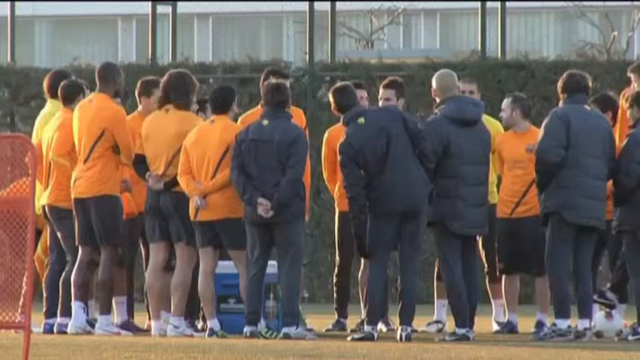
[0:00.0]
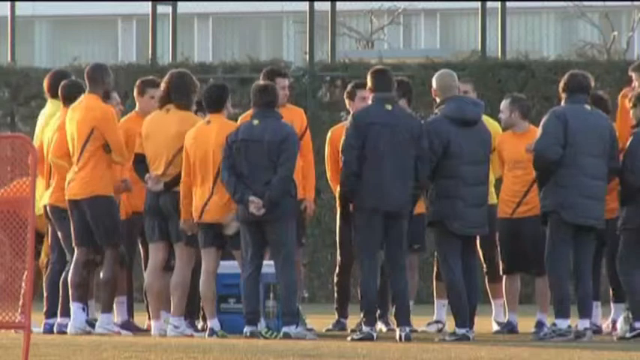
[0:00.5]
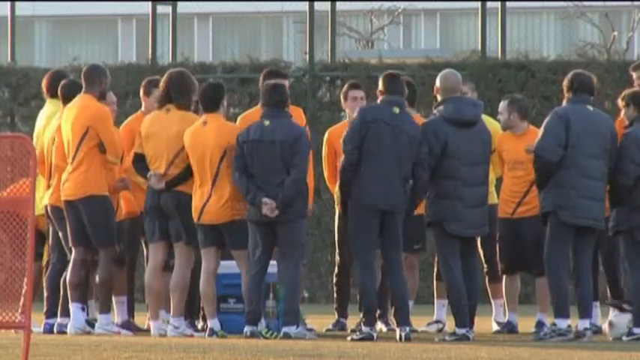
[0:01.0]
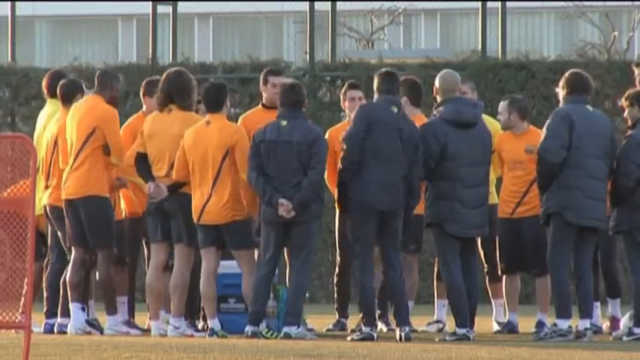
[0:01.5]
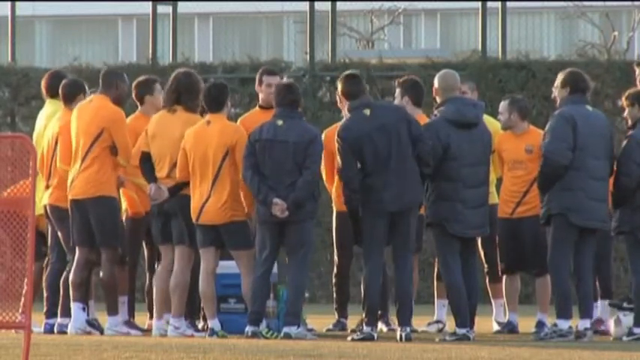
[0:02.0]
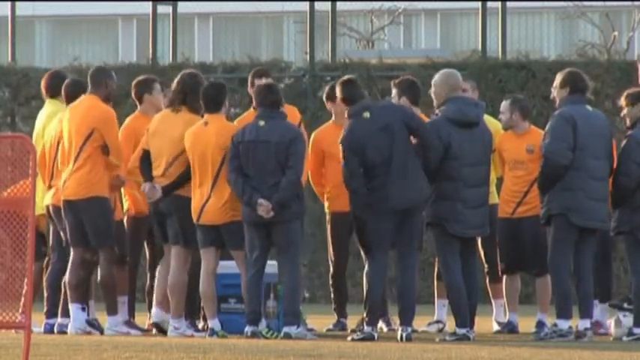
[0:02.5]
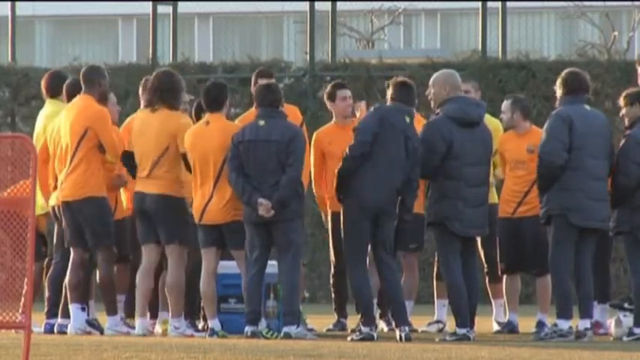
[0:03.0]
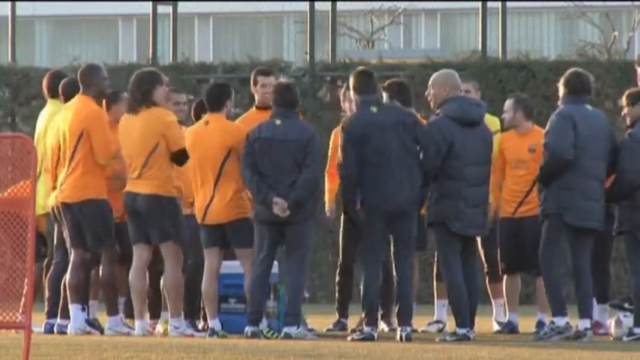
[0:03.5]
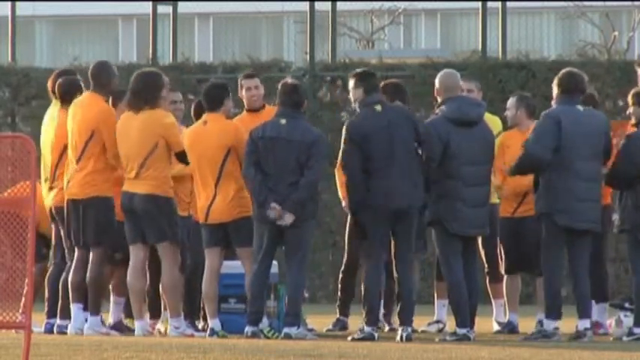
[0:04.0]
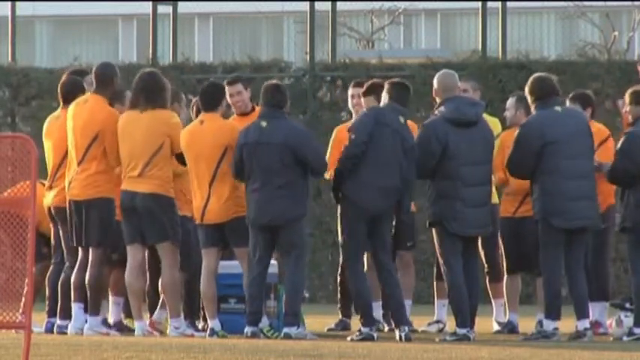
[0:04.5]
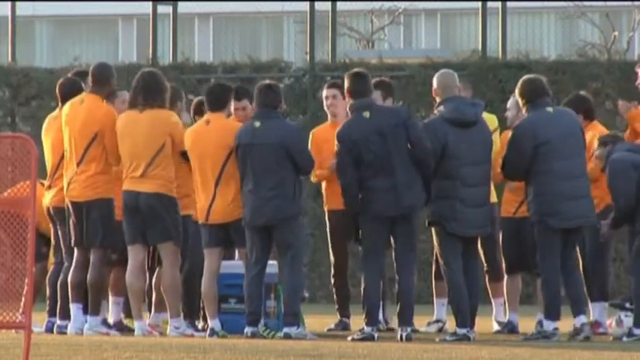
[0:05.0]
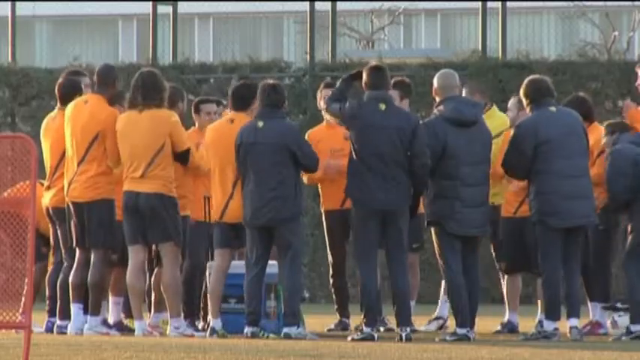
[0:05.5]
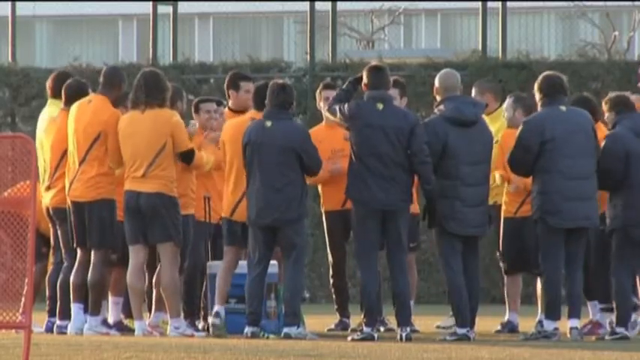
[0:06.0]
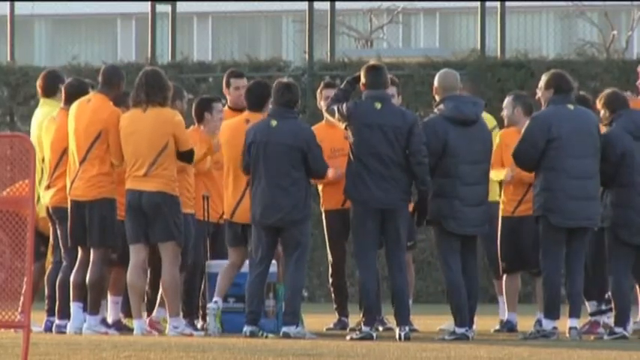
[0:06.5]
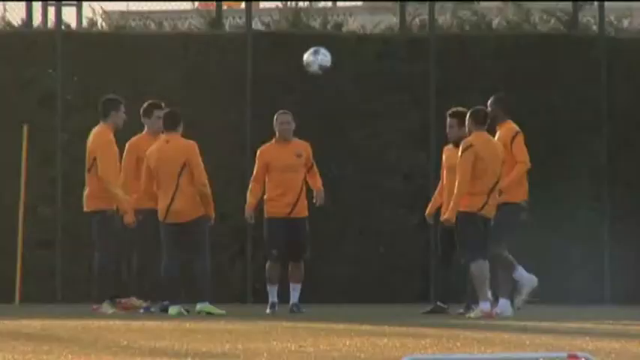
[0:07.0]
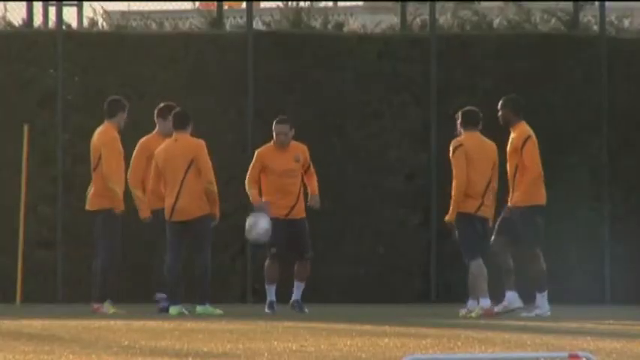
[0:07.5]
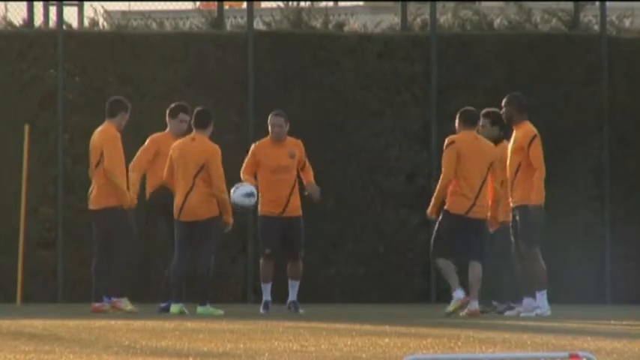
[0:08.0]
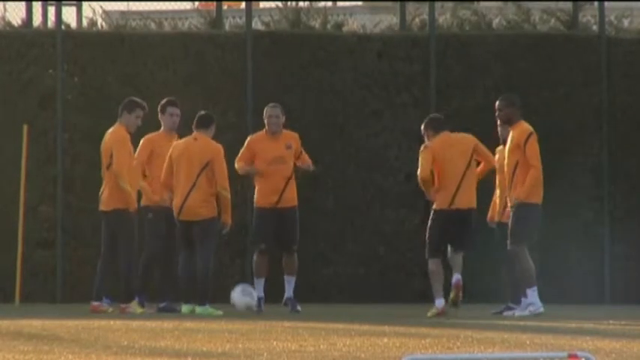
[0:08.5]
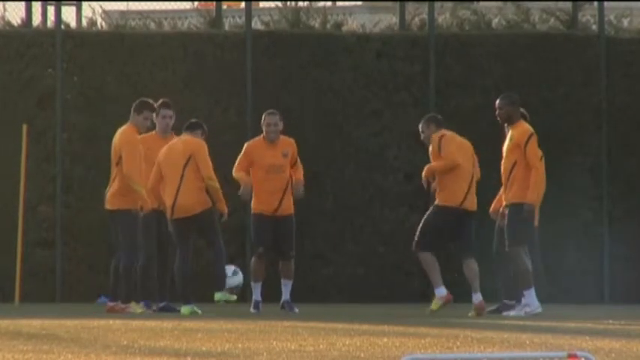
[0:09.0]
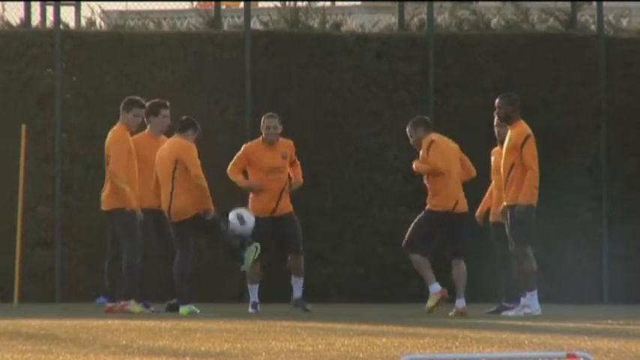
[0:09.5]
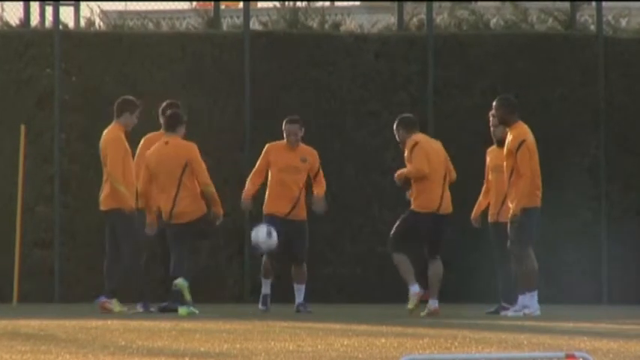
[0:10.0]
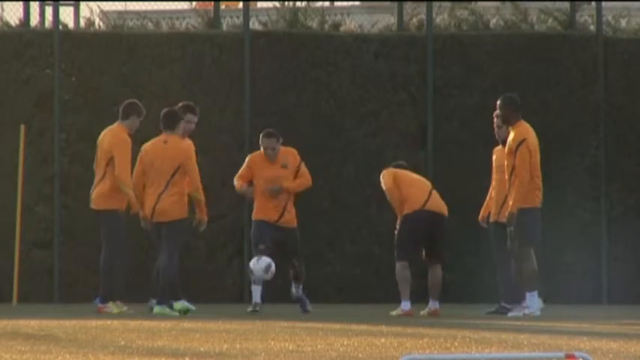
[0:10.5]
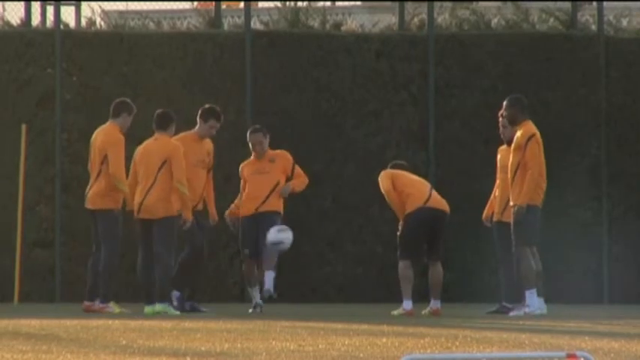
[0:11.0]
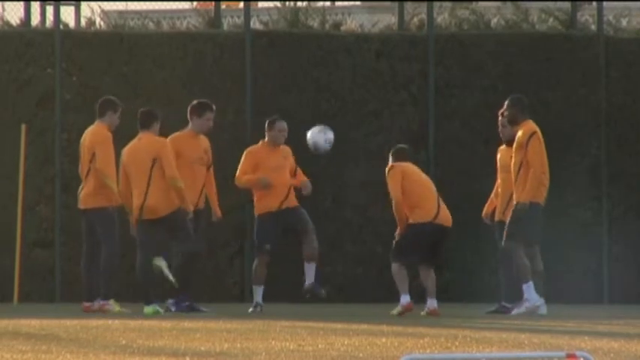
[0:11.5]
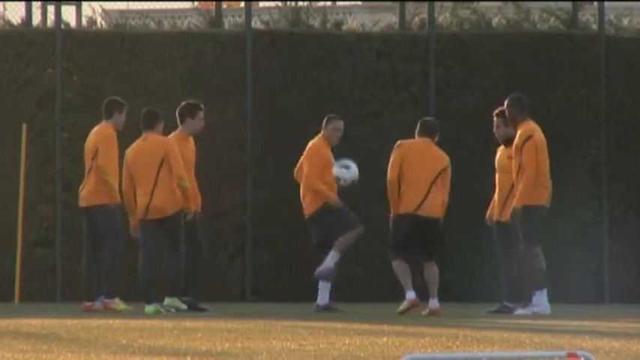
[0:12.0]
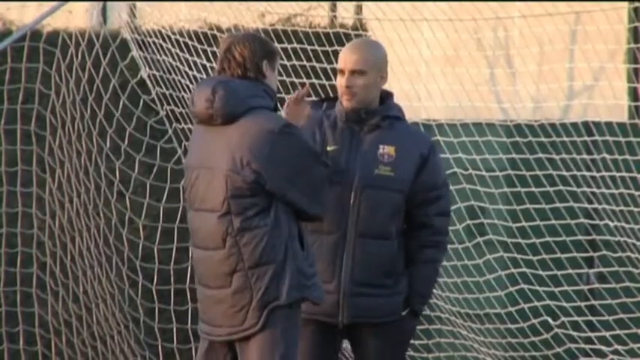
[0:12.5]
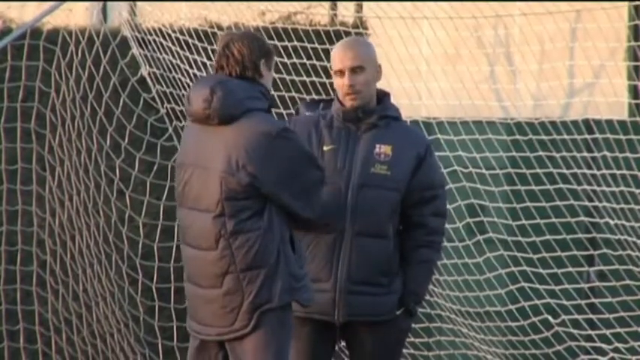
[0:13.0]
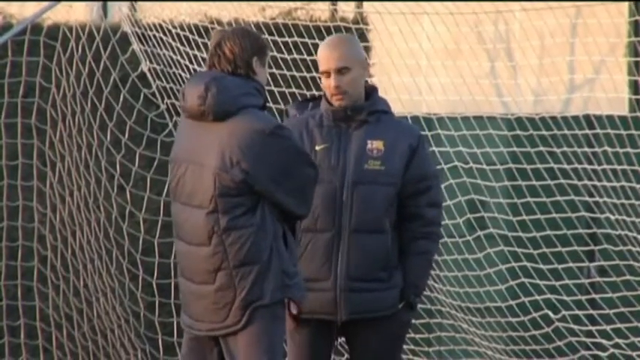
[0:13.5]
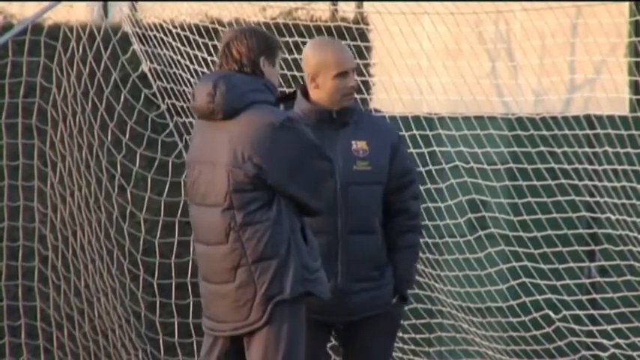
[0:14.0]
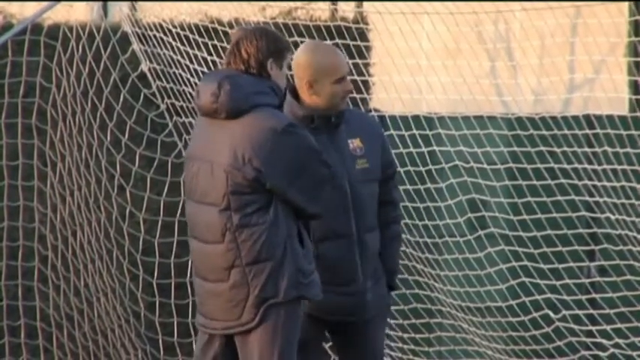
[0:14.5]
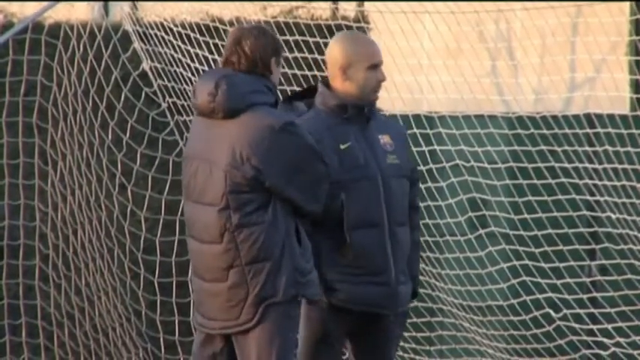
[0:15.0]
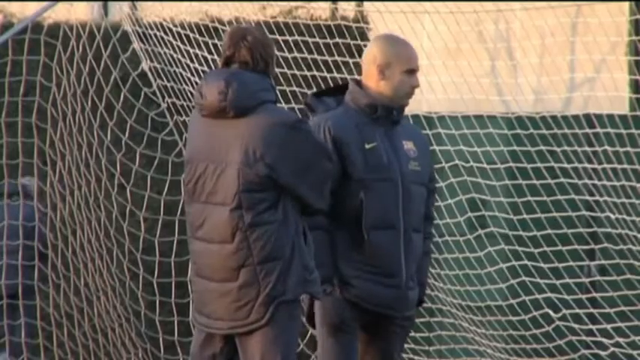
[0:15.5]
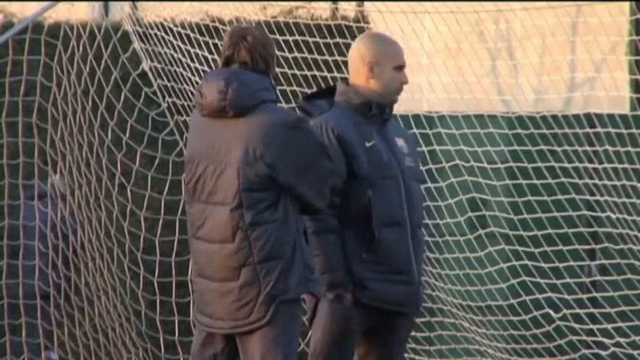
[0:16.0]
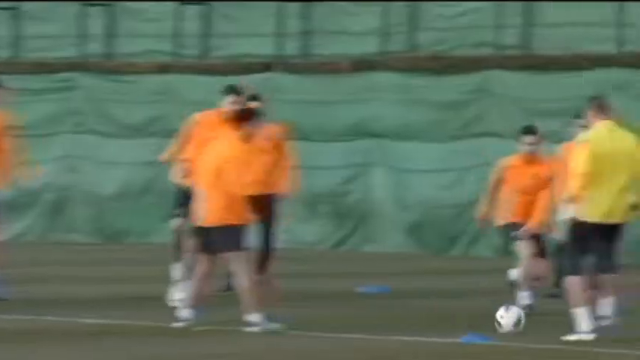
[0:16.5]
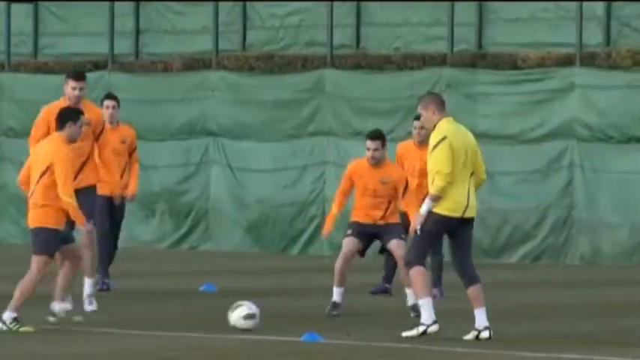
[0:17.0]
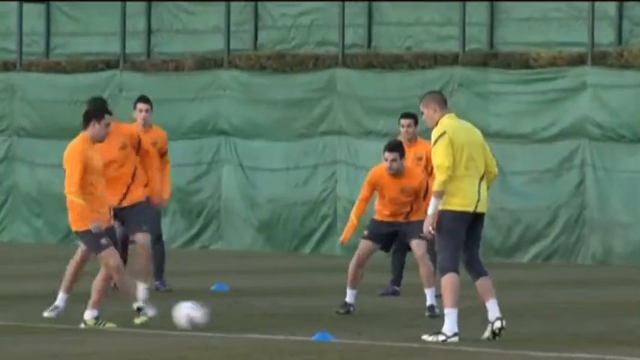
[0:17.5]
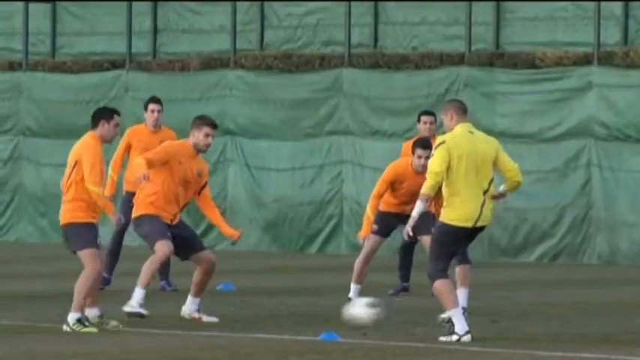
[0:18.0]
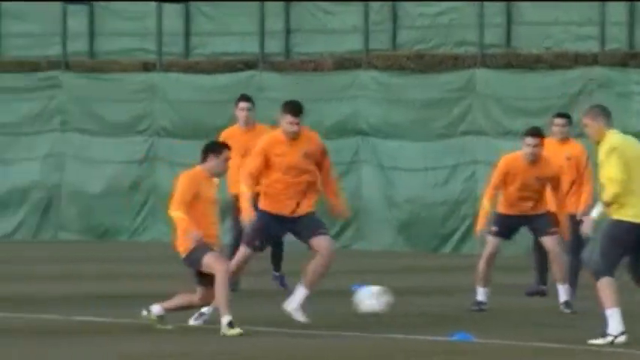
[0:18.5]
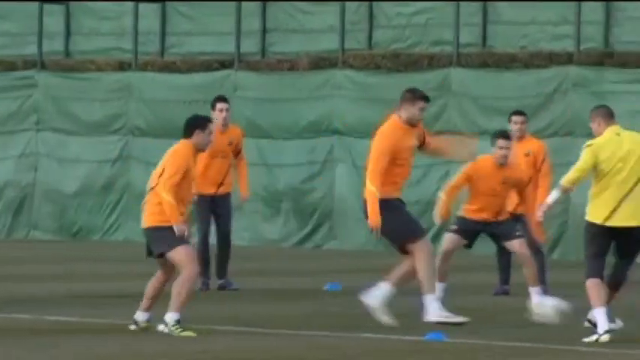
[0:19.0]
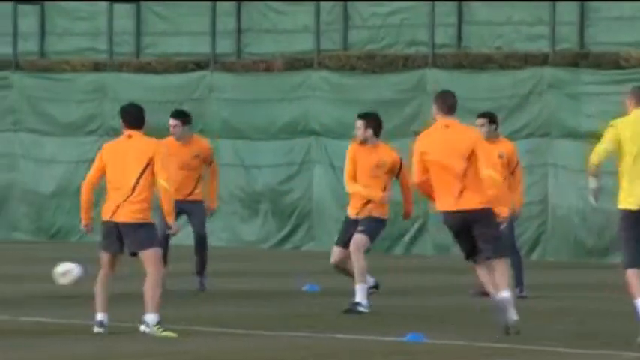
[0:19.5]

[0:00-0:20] The opening shot shows a group of players at a European football practice. Most wear orange long-sleeved athletic tops and black shorts; they are possibly the team from the Netherlands, or possibly another team that wears orange. Coaches in black bomber jackets are present, and the climate looks relatively cold. The players stand in a circle with a cooler in the middle of the group, and various players are laughing, conversing and stretching. A group of seven players in orange jerseys practice kicking a ball to each other, doing little tricks. Two coaches, both in winter bomber jackets, are speaking; mostly the back of the coach on the left, who has brown hair, is visible, while the coach on the right is completely shaven and bald. Both are white men. Next, five players in the orange jerseys and one player in a yellow jersey, presumably a goalkeeper, do some sort of drill in which they try to keep the ball away from one of their teammates. The backdrop of the drill is a green wall.